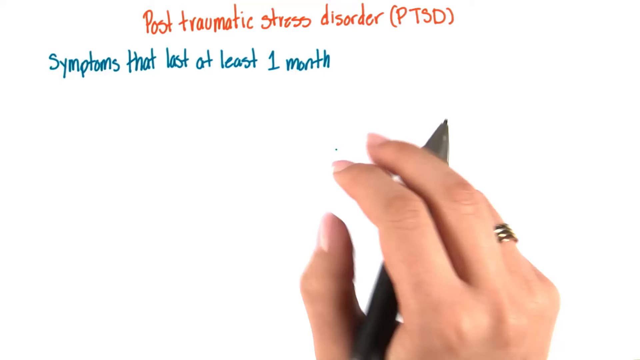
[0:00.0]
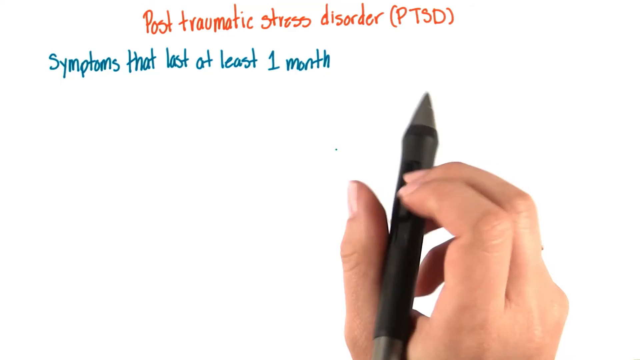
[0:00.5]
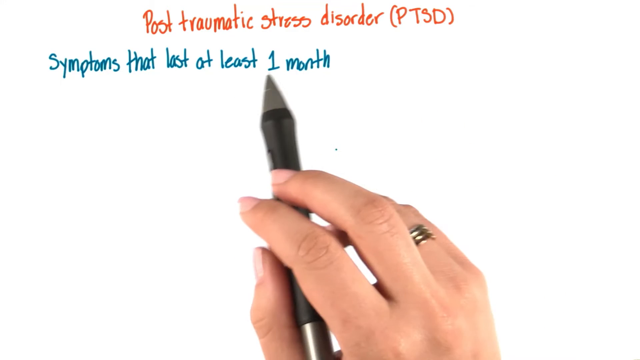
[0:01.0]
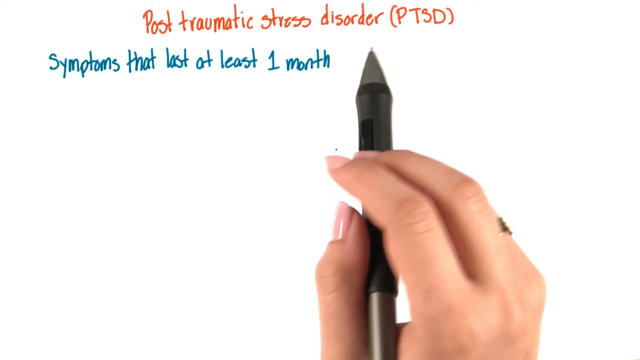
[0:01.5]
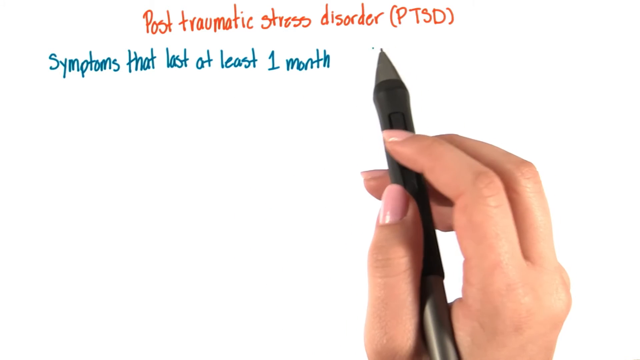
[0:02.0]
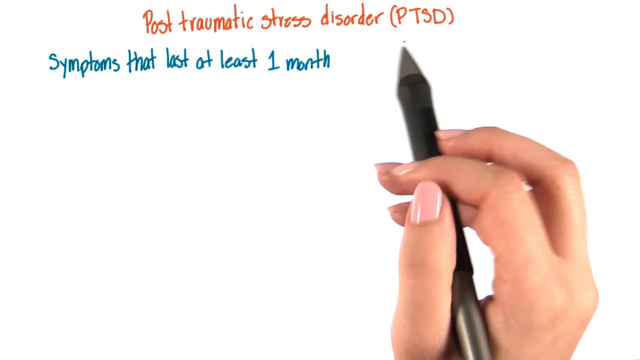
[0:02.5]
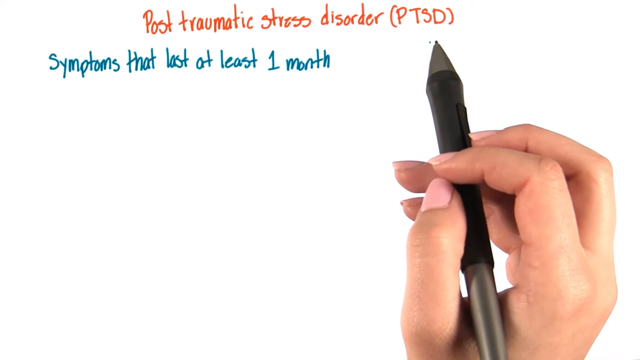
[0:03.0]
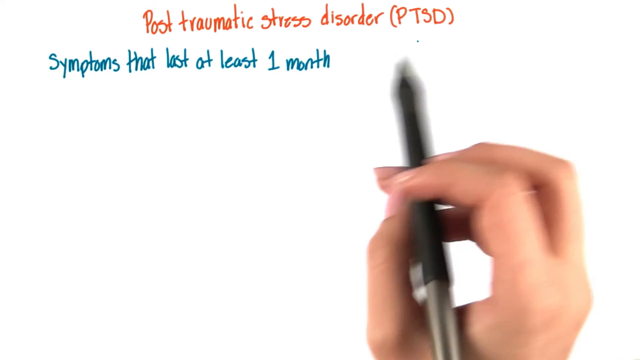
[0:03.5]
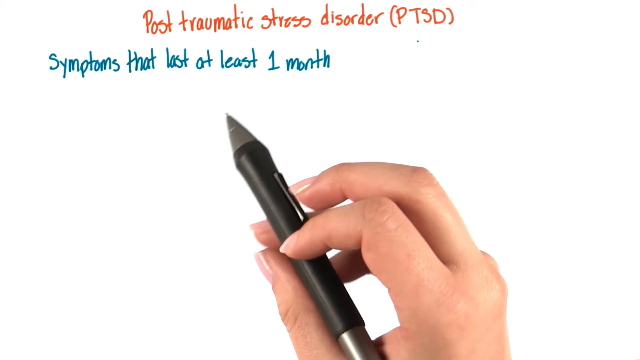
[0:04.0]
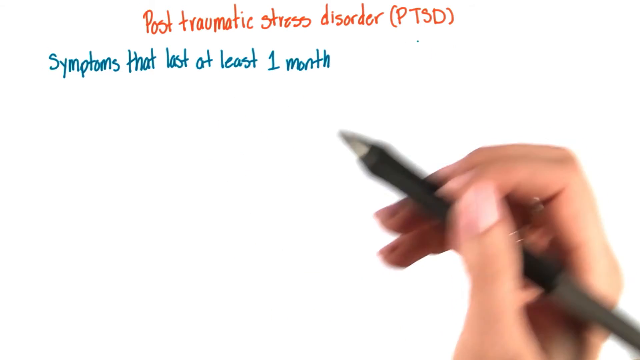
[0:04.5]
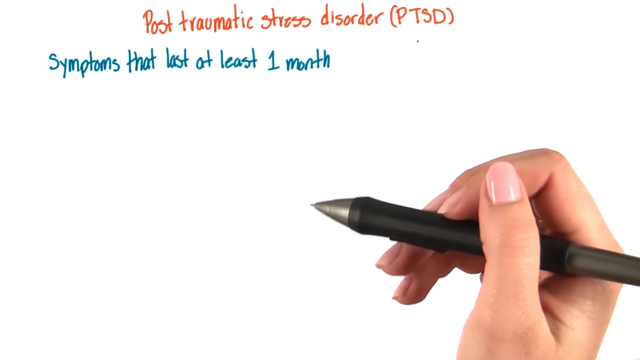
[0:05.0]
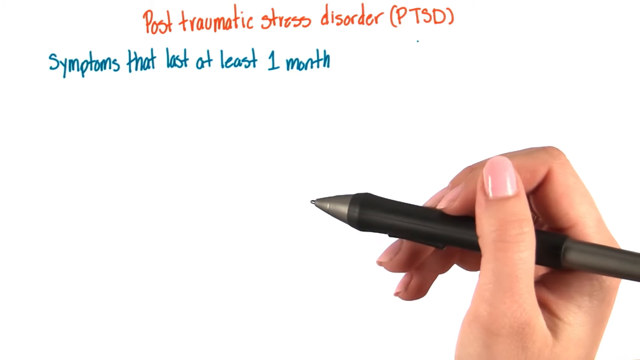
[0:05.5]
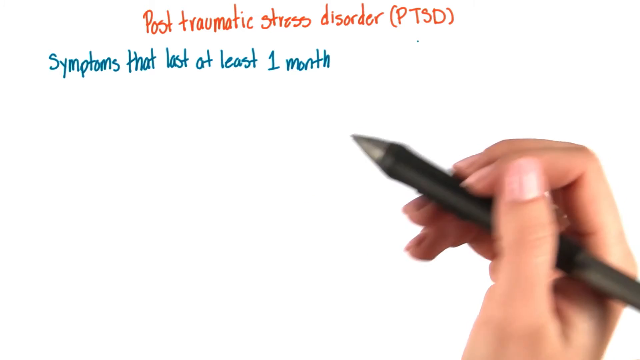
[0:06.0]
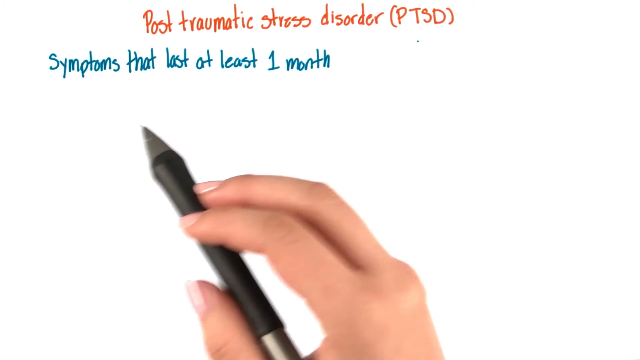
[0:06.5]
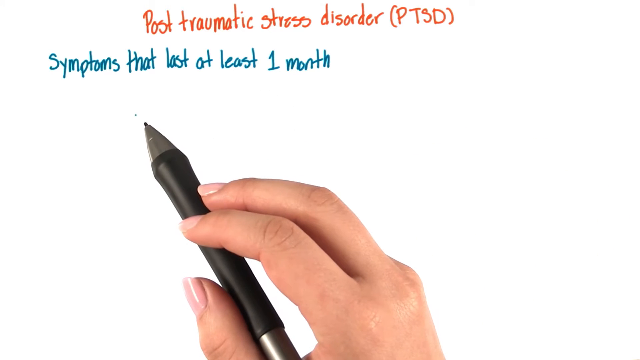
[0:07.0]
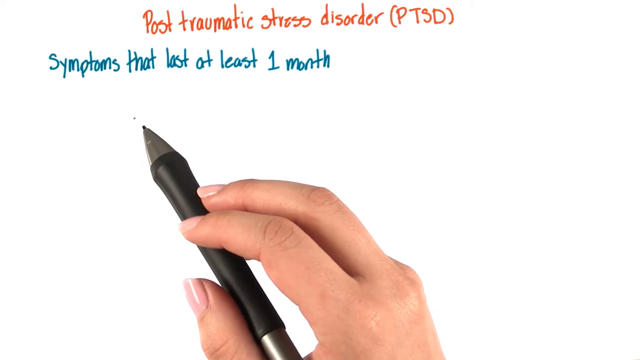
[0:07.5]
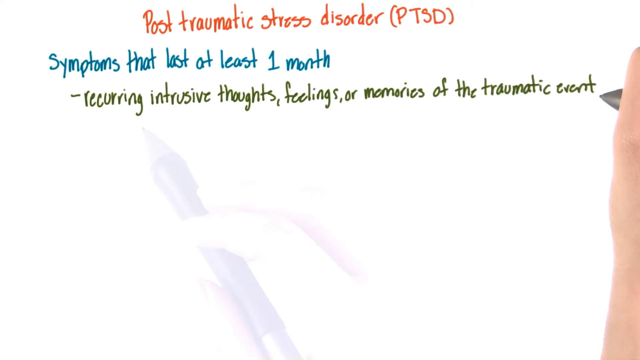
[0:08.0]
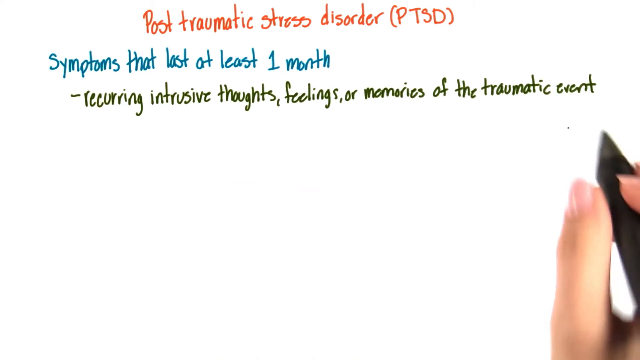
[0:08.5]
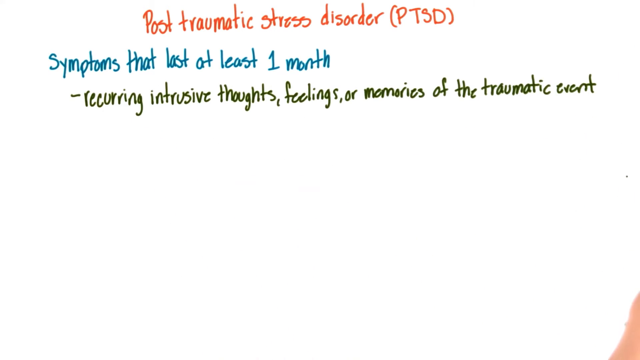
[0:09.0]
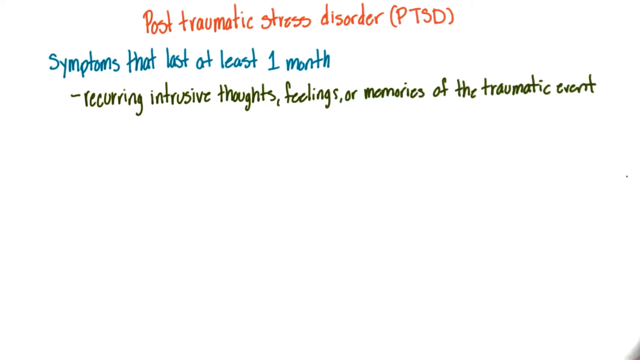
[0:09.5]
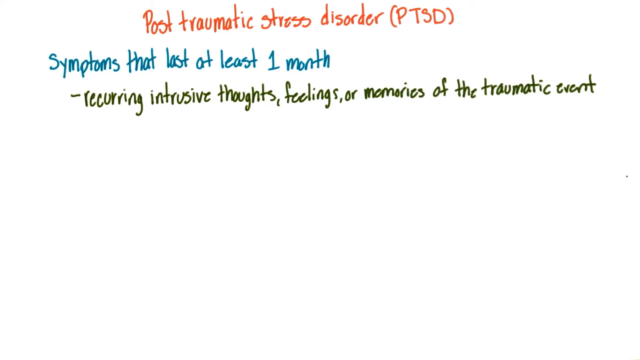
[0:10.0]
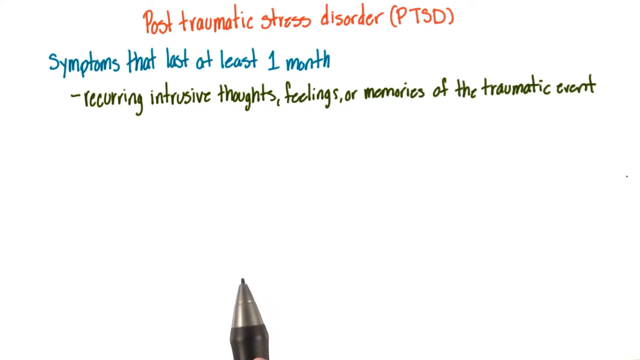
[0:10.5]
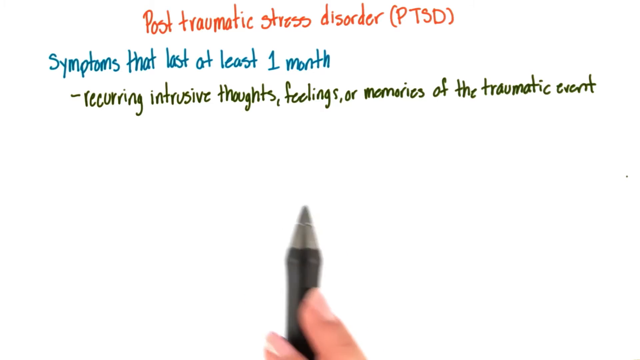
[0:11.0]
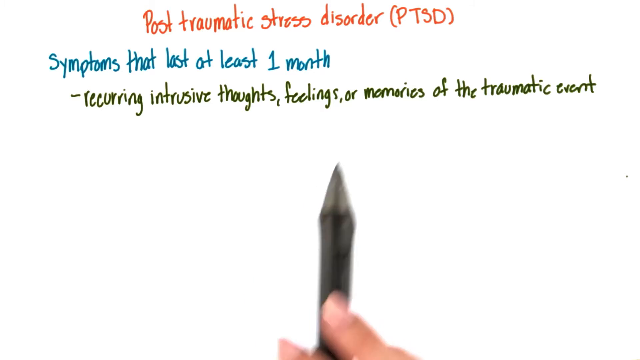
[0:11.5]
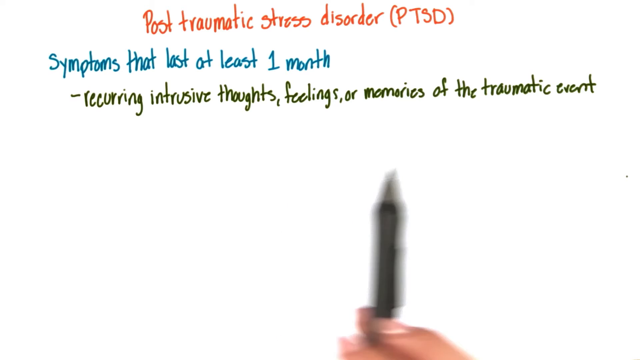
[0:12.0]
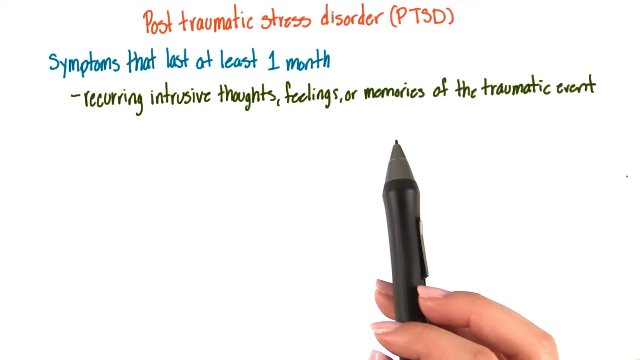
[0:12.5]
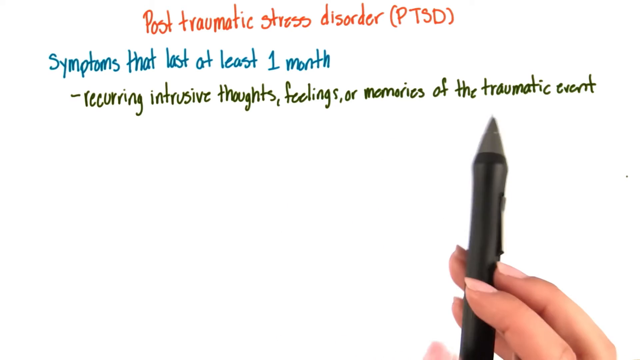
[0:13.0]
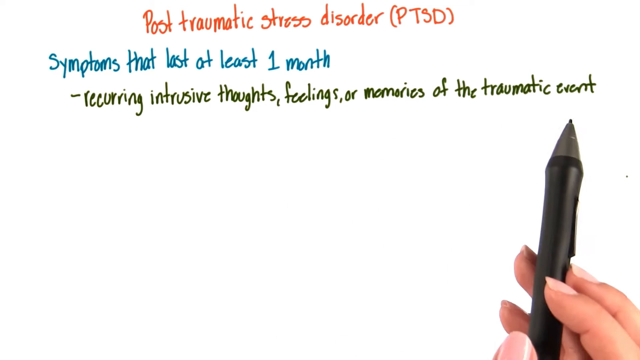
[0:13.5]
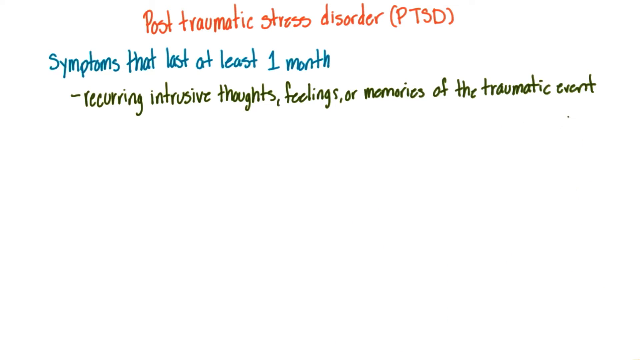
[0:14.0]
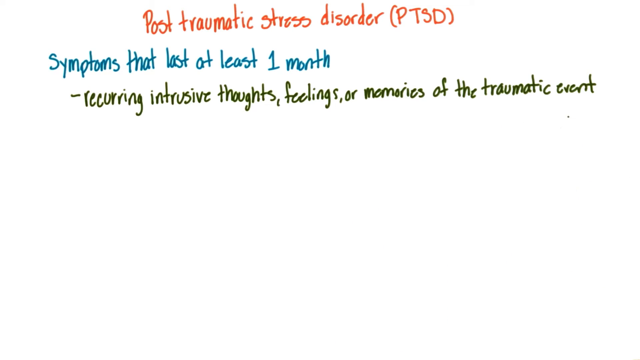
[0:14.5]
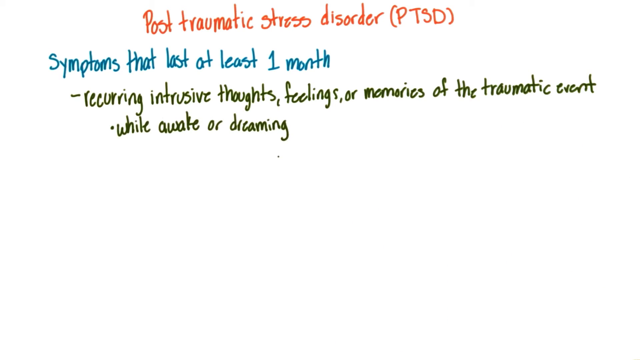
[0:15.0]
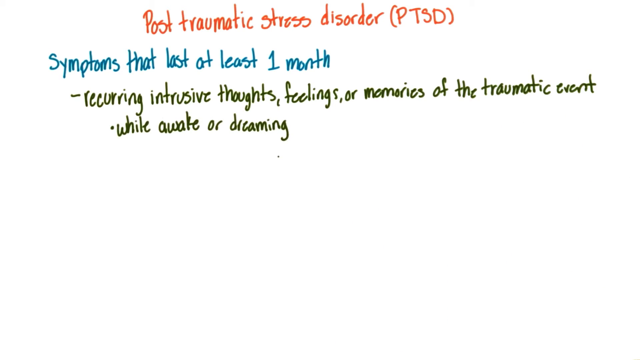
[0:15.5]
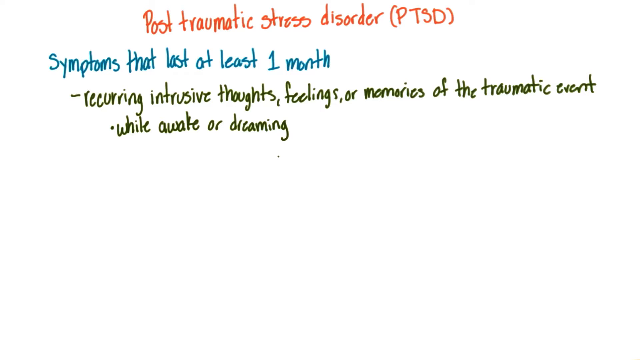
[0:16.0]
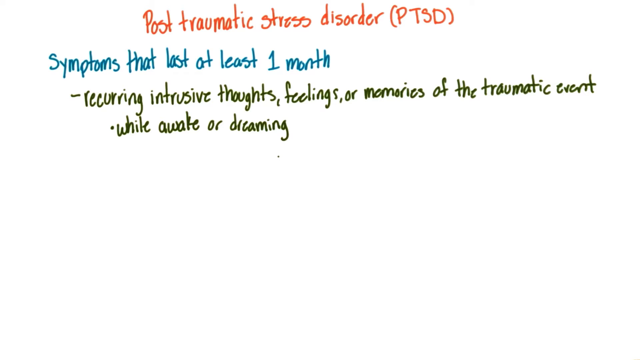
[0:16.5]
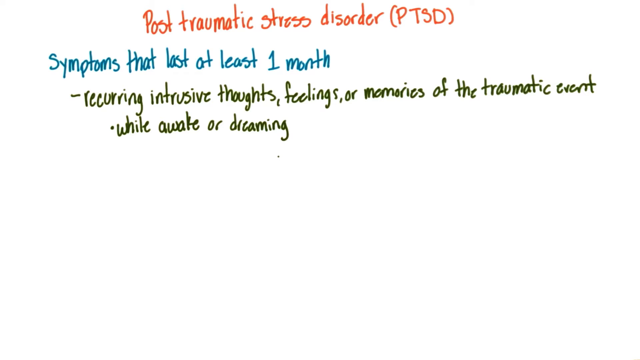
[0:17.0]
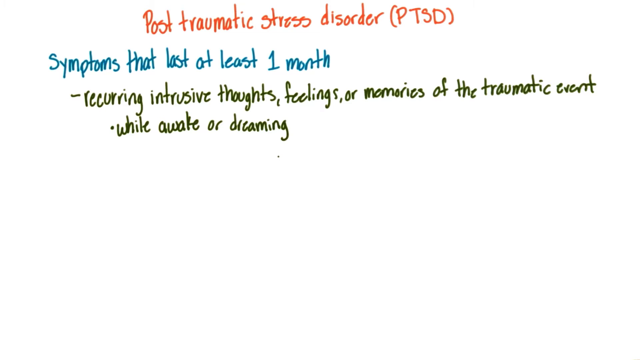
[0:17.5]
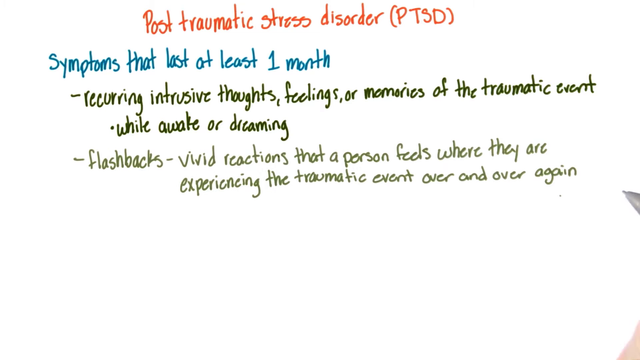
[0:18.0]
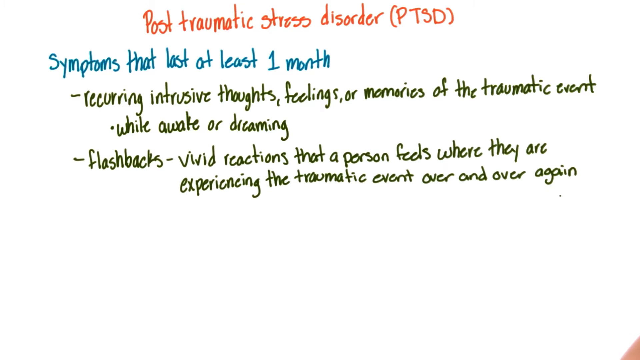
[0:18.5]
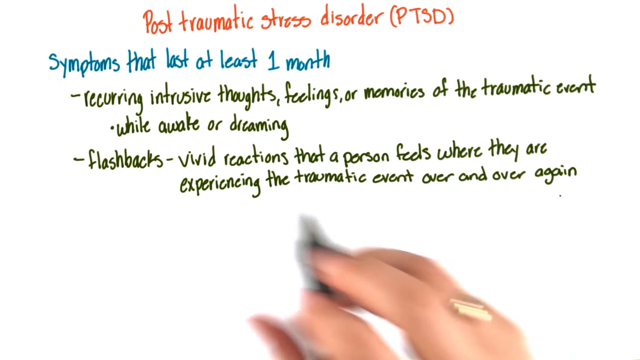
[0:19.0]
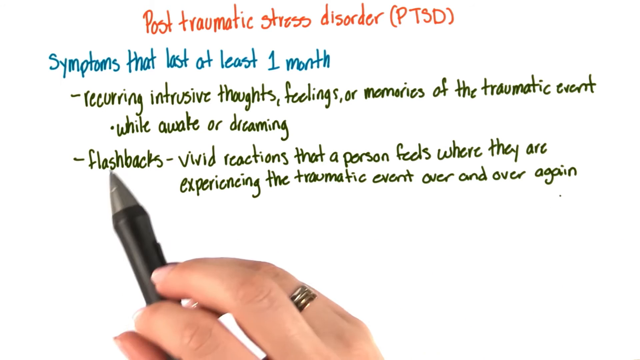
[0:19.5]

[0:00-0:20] The video is about PTSD. It opens on a white background with red text across the top reading "post-traumatic stress disorder" followed by "PTSD" in all capitals inside parentheses. Below that, in blue and slightly shifted to the left, the text reads "symptoms that last at least one month." A woman's hand comes in from the bottom holding a pen, which goes between the thumb webbing and the pointer finger, with the thumb going out and up and pink fingernails coming up over the top of the pen. The pointer finger, the middle finger, a little of the fingertips with pink nails, and a little of the knuckles are visible, along with the bottom part of the ring finger, which has a ring on it. The pen is black with a black grip; its tip is silver, and the back toward the end is also silver. The fingers stretch the pen out, point toward "PTSD," and then point down to the bottom line. The hand kind of turns sideways to the right, showing the side of the fingers, the back of the thumb and a little of the palm. Then, in black underneath the blue text and shifted a little to the right, the words "reoccurring intrusive thoughts, feelings, or memories of the traumatic event" are written. The pen goes off the right side, then comes in from the bottom again, pointing and moving to the right. A bullet point is added below, also slightly shifted to the right, reading "while awake or dreaming."